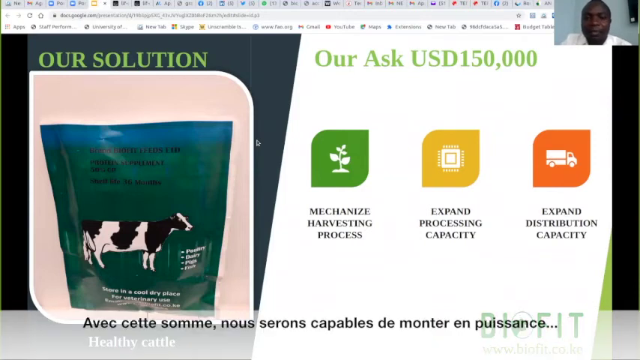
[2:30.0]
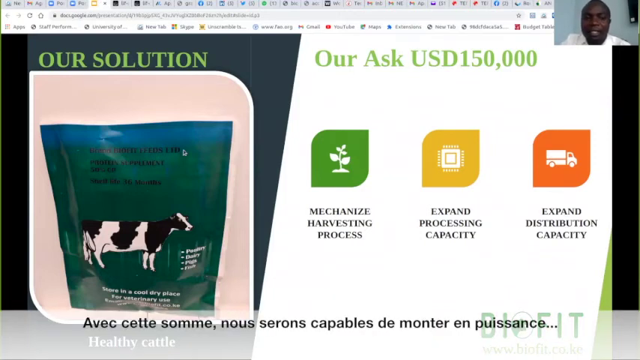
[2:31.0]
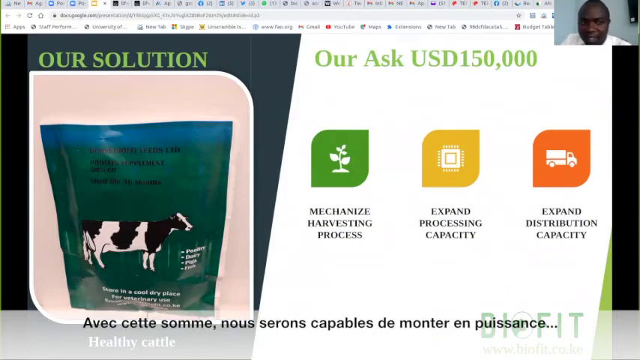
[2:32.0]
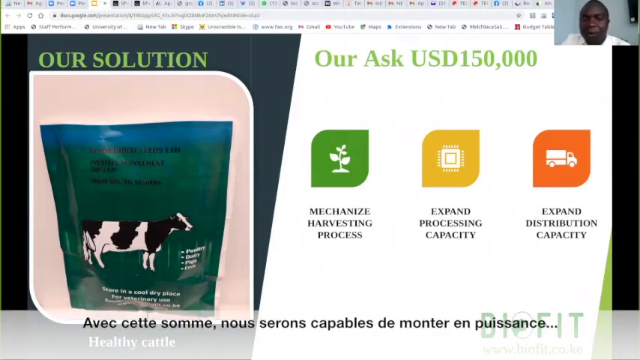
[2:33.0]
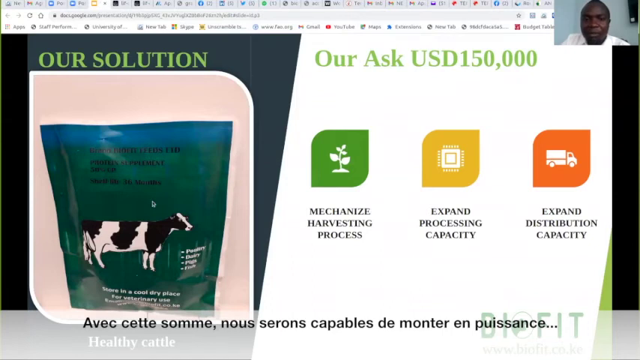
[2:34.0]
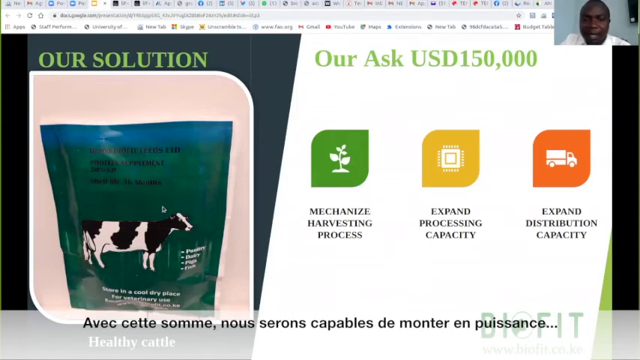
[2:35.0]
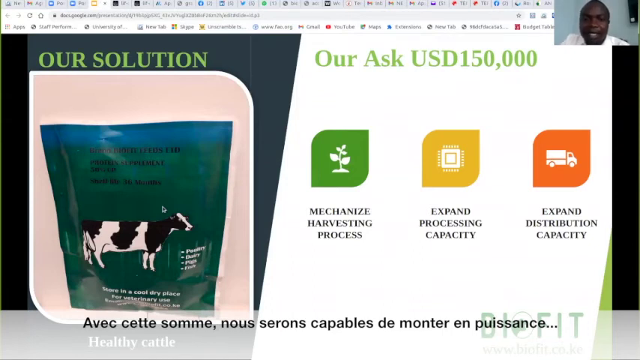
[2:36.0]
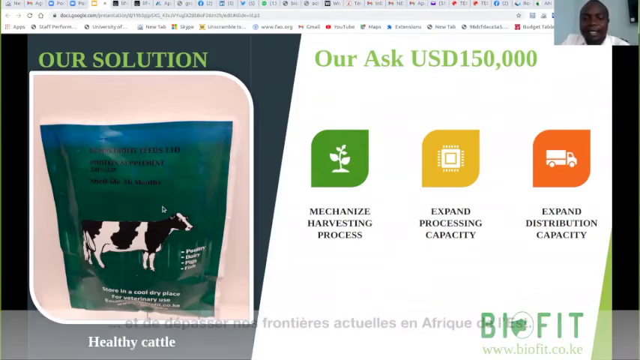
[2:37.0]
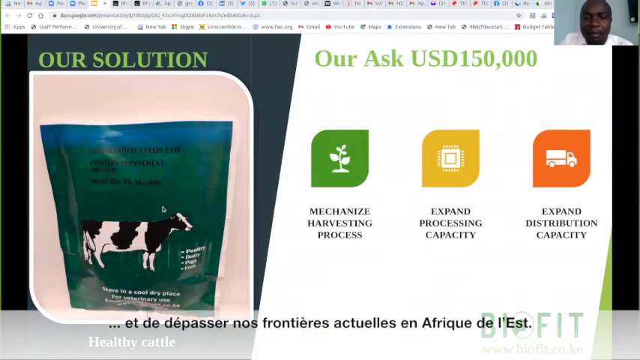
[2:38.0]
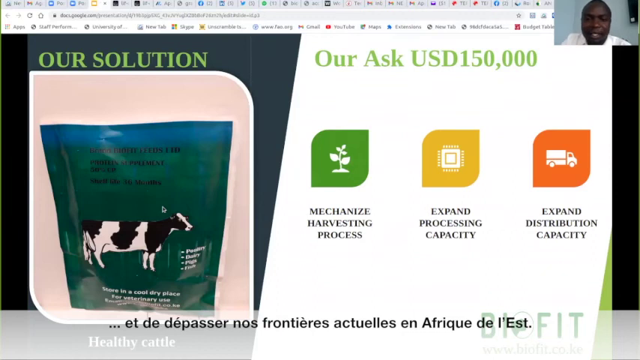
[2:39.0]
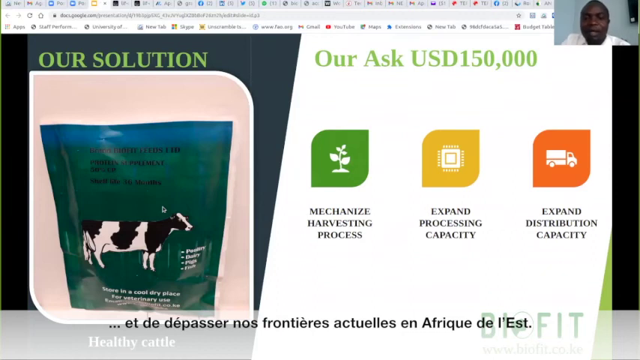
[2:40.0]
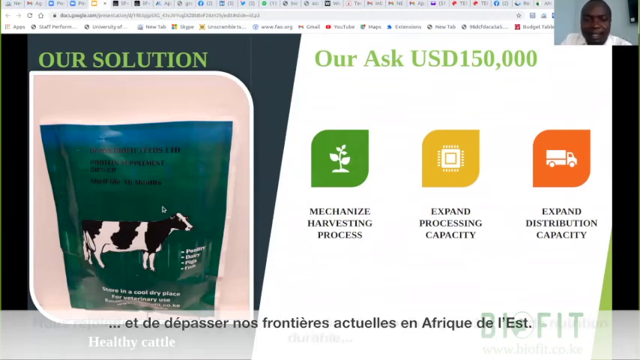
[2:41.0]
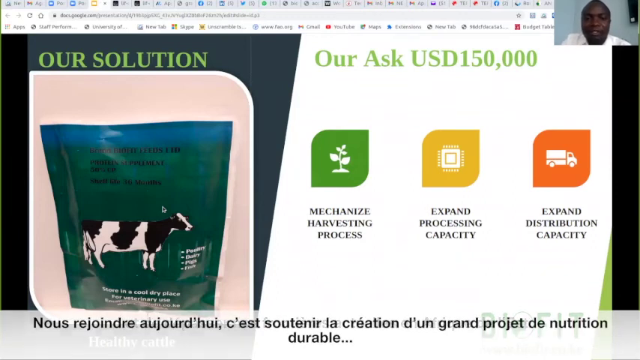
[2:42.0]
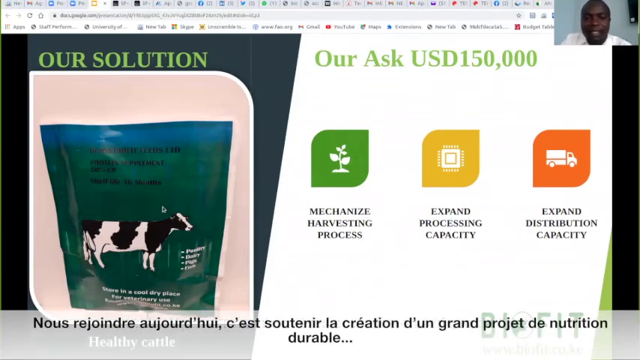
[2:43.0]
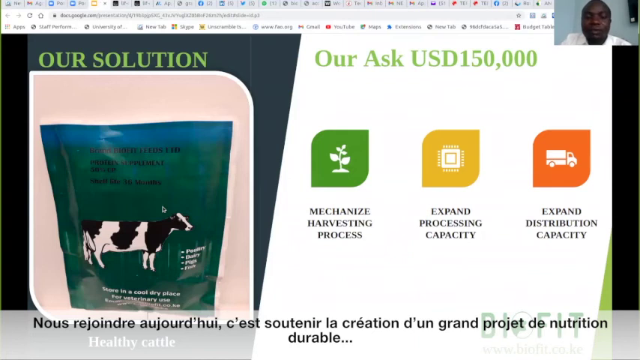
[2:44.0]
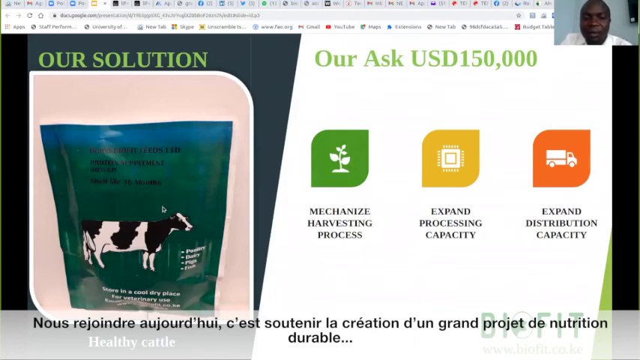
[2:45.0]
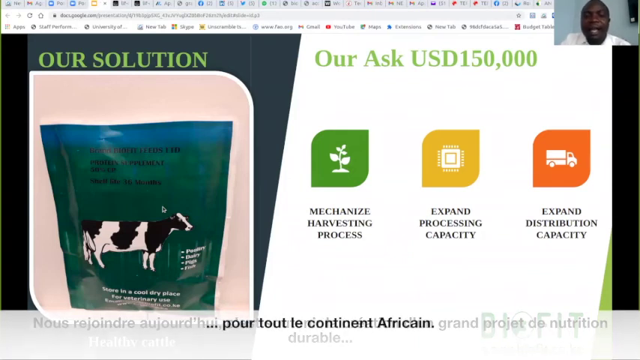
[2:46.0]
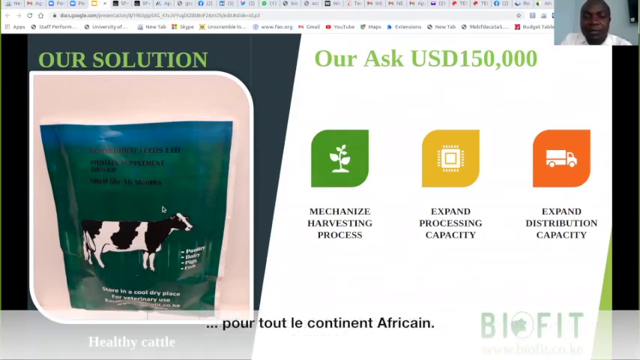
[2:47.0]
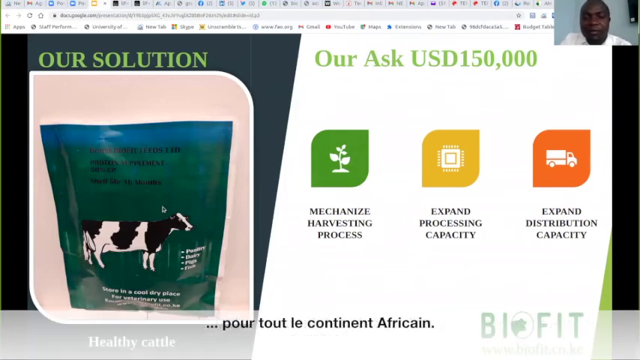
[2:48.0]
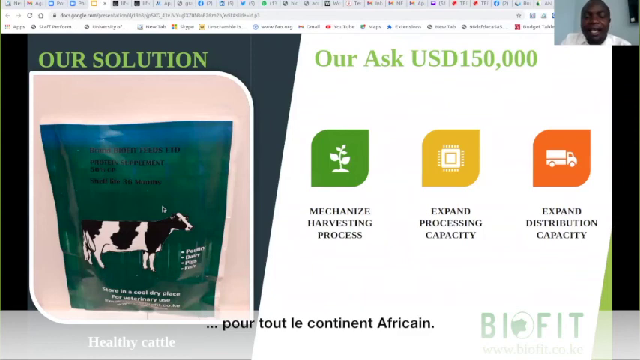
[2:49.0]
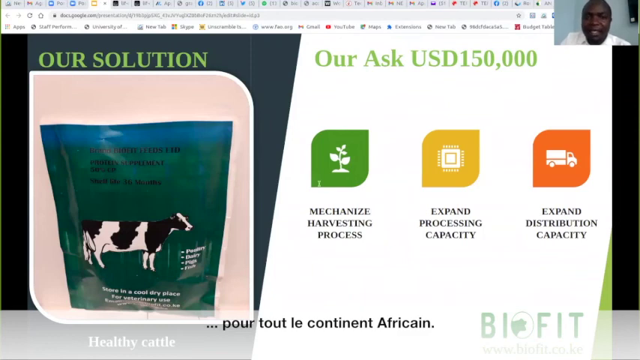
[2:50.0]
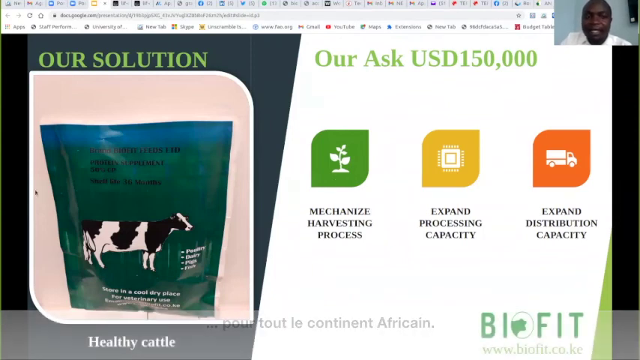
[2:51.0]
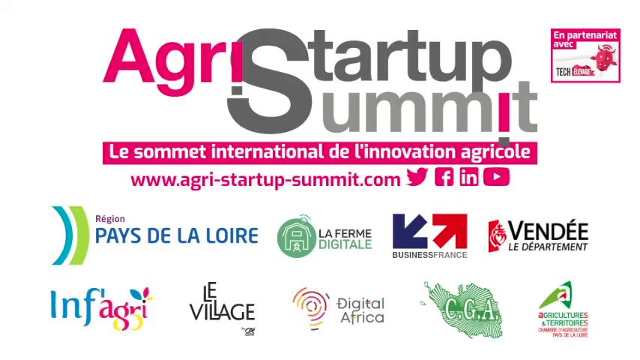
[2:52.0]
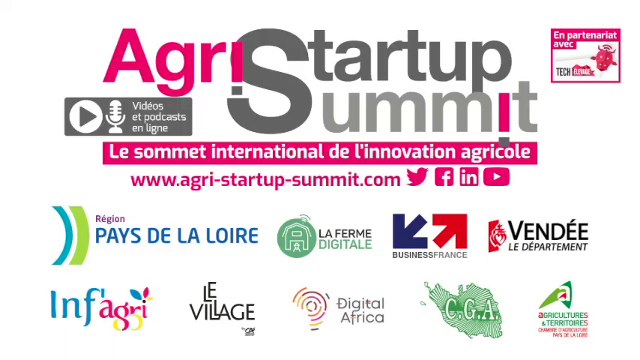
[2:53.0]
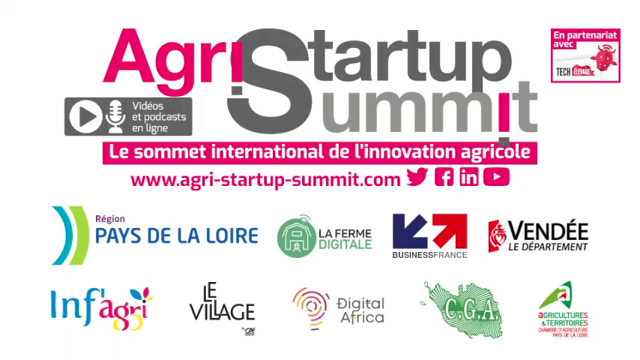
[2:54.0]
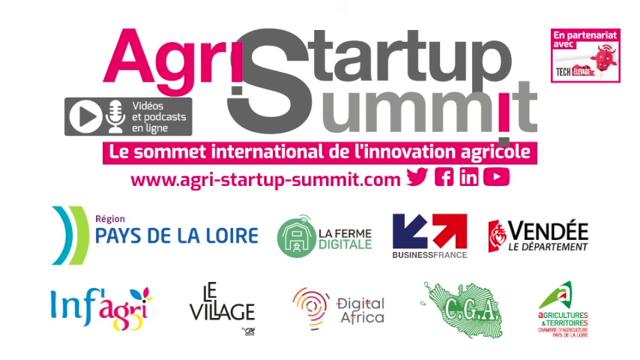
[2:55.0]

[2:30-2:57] The screen returns to where the man is asking for $150,000 in donations. The slide mentions healthy cattle.